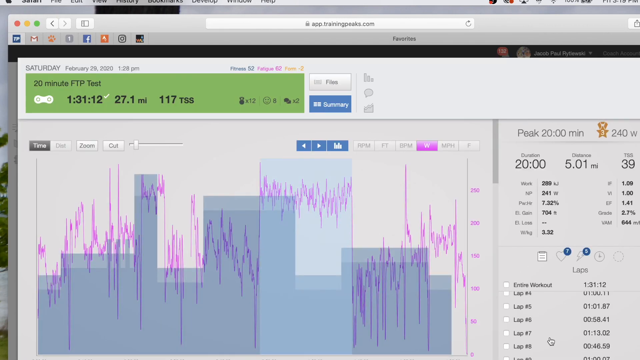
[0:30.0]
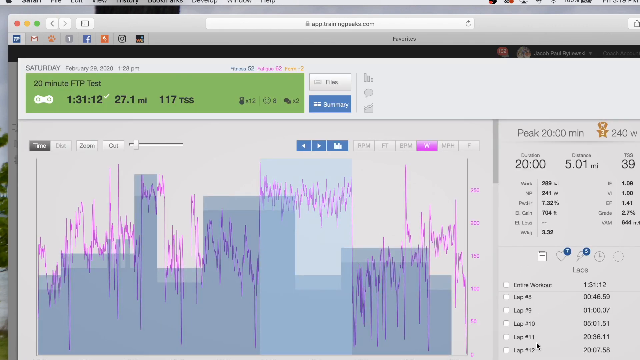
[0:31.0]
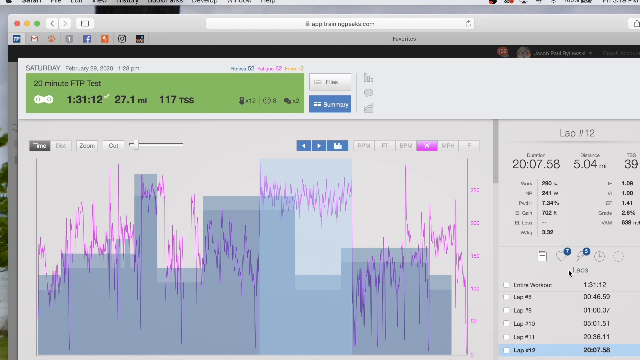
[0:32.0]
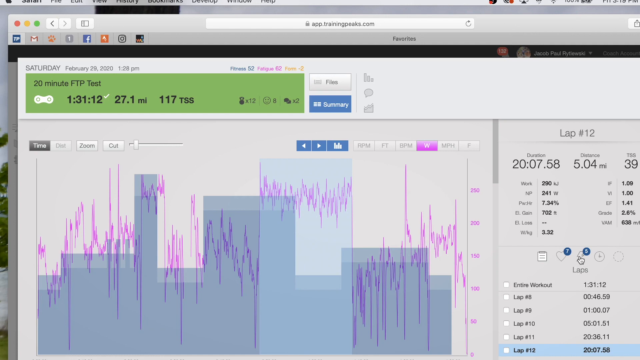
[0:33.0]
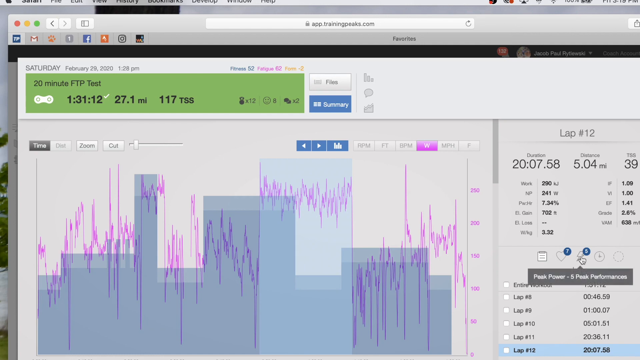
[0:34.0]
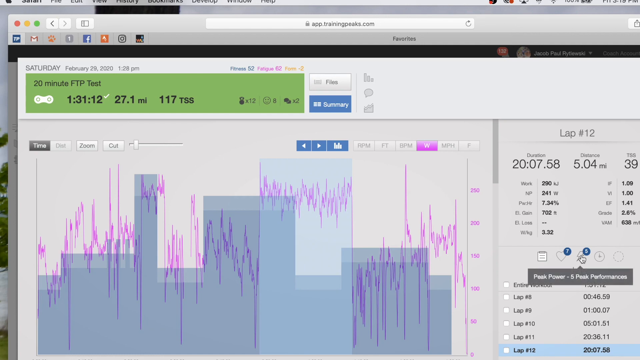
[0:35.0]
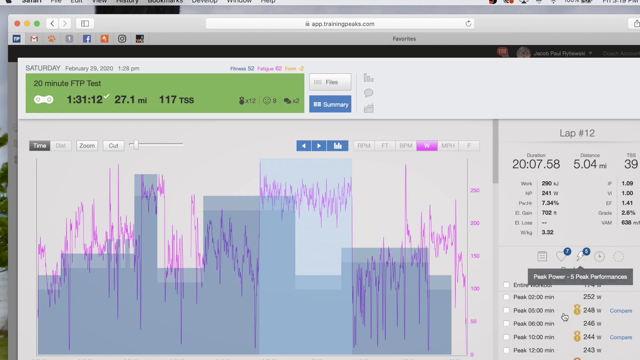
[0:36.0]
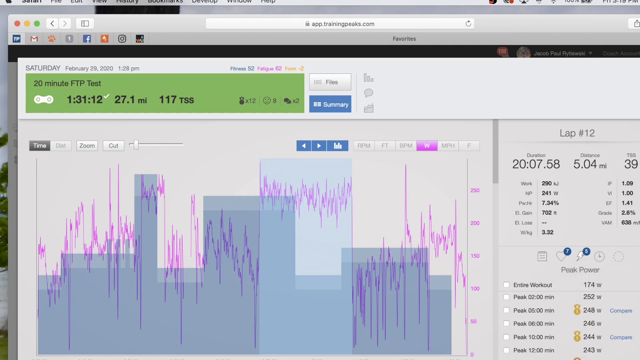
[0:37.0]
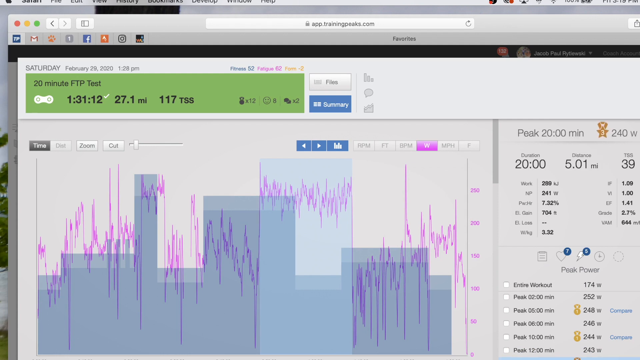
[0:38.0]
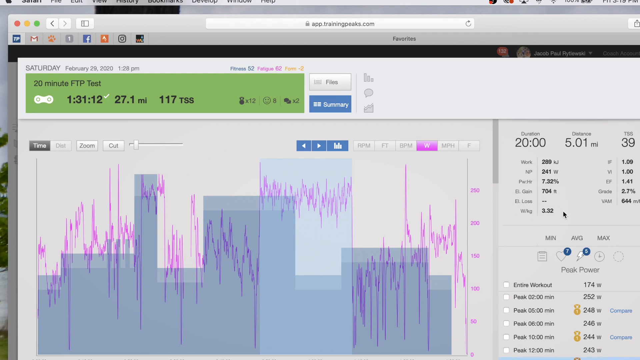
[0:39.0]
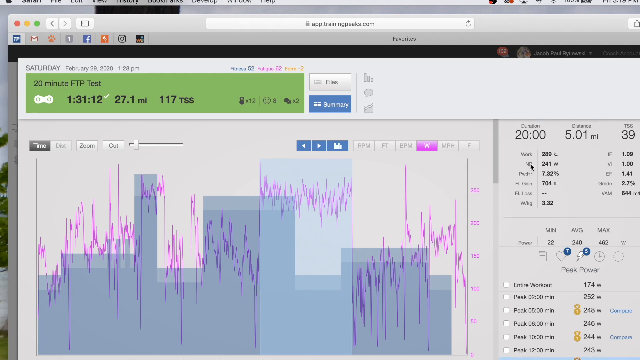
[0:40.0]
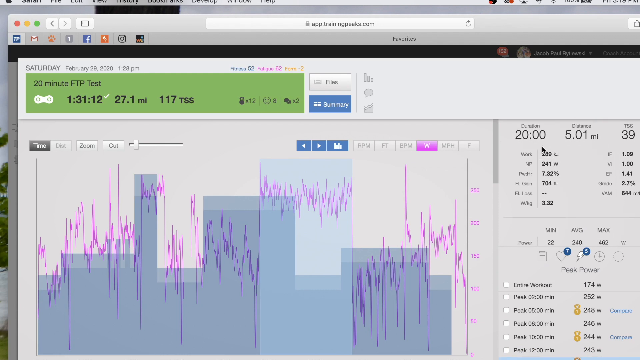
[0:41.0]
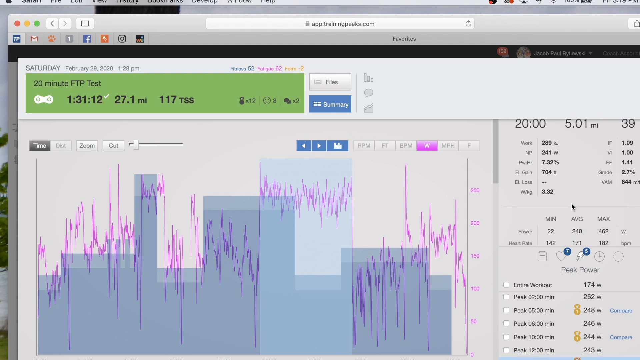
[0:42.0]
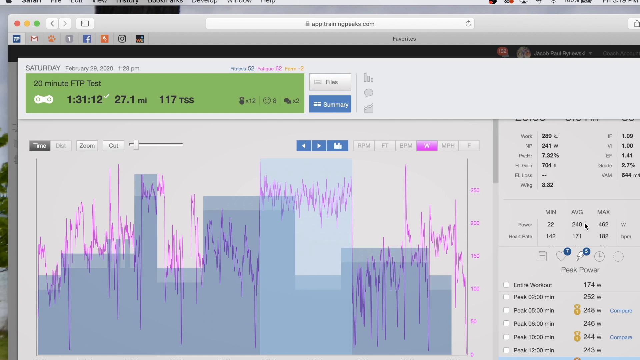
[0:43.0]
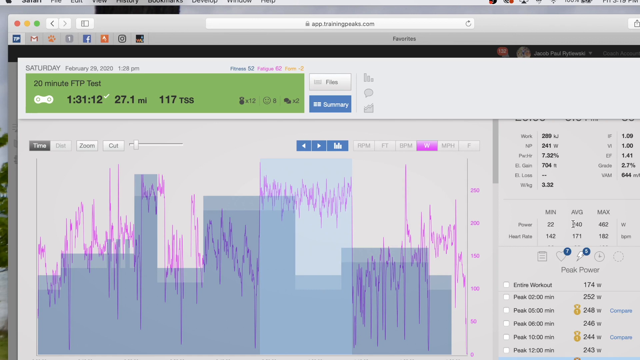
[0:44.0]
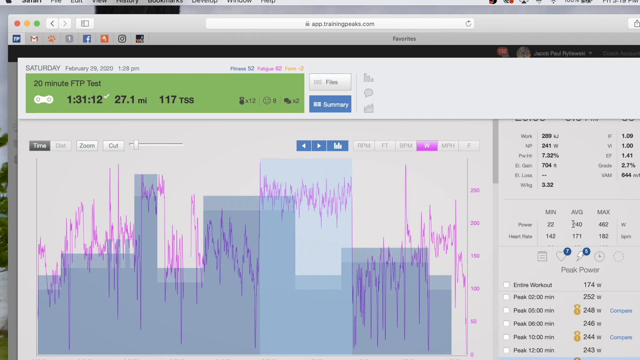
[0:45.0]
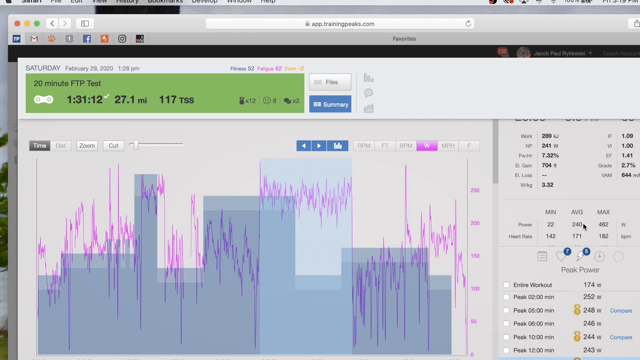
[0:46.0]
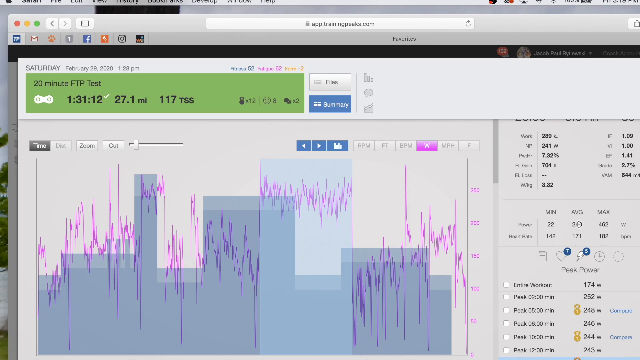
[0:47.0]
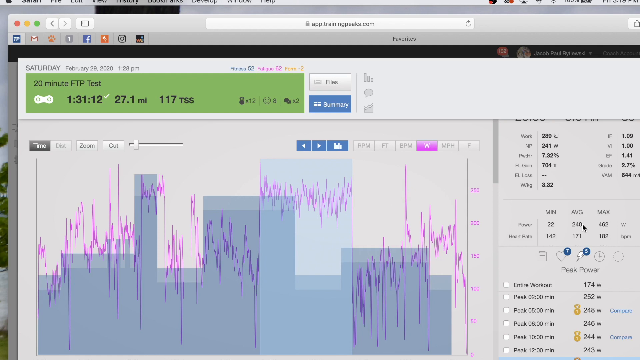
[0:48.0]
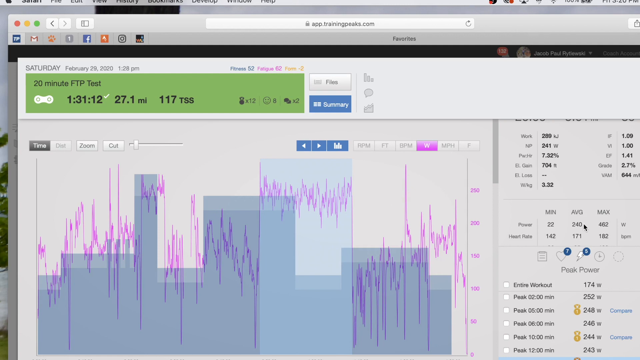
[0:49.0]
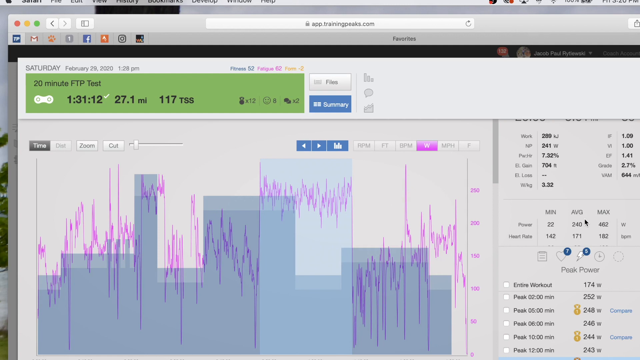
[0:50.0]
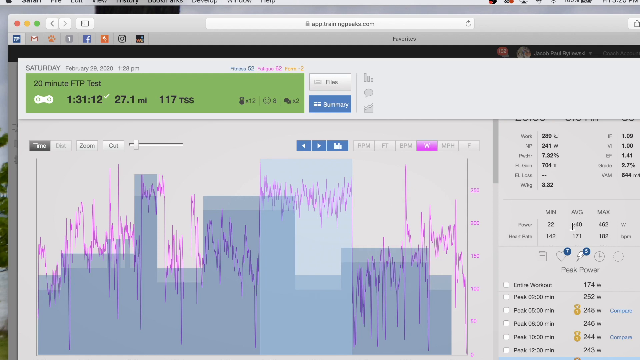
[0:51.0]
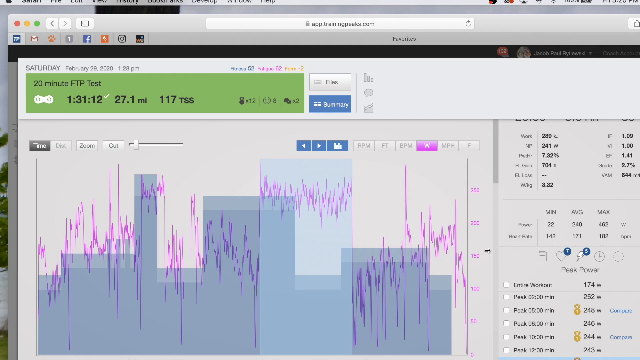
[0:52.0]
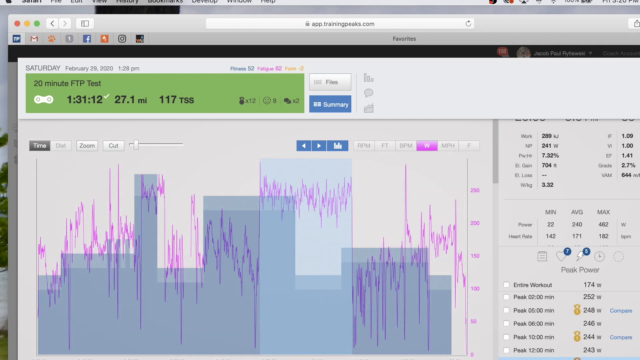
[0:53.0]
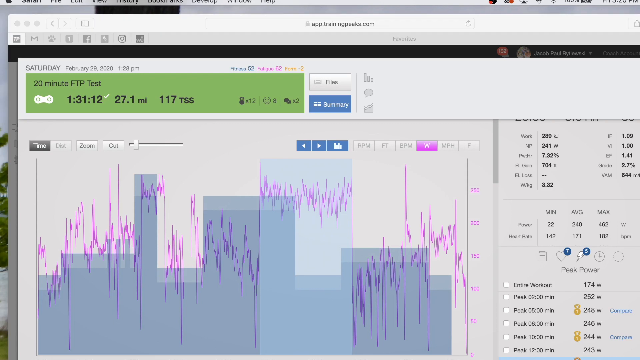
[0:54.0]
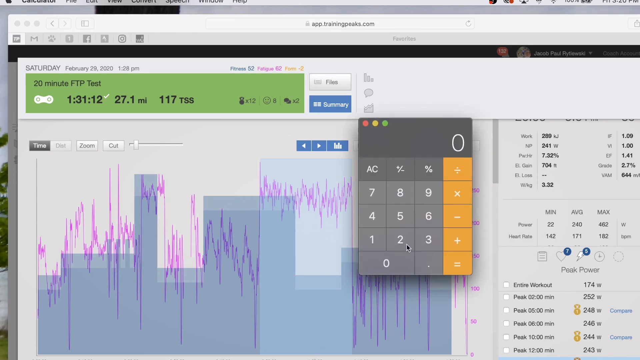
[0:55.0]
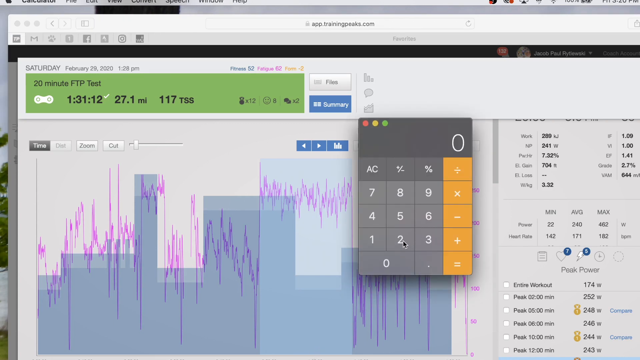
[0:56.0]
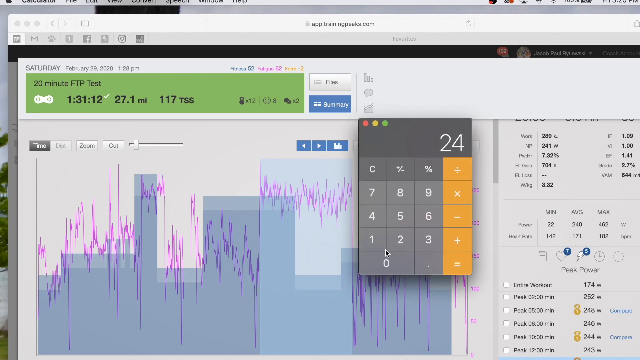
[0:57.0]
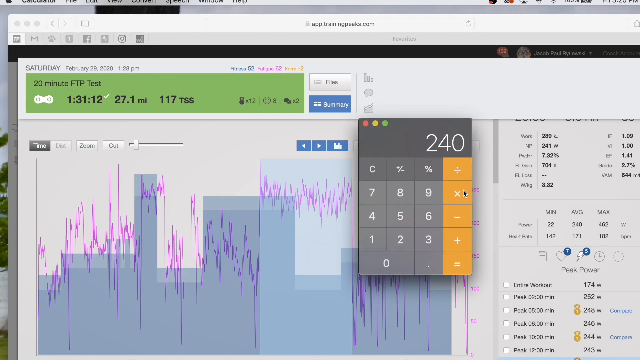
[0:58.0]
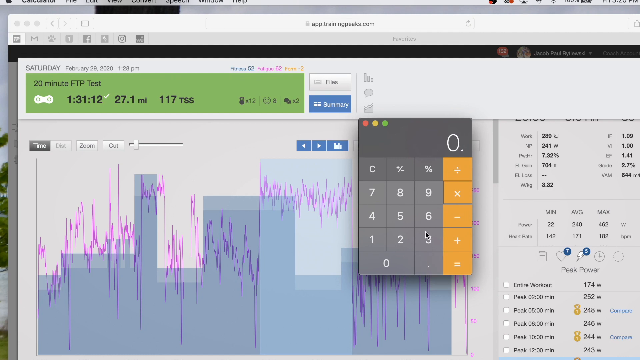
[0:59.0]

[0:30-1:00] The screen still shows a graph at the bottom on the right side. The user scrolls at the bottom and changes the selection to lap number 12, which shows information on that lap, such as speed and distance, with various information below. The cursor moves up to an icon that looks kind of like a lightning bolt, with "peak power" written below it. Going up above that, the user scrolls down through the different times and the minimum, average and max values, focusing on the average and moving the cursor back and forth over the number 240. The cursor then goes back over to the graph and clicks something that brings up a small calculator, where 240 is typed in and multiplied by 0.95. The image is very blurry all over, so some of the lettering is hard to make out. In the green rectangle at the top it says "20 minute ftp test", followed by an icon that almost looks like a small controller for a PlayStation or an old-school Nintendo, then 1 hour 31 minutes 12 seconds, 27.1 miles and 117 TSS. Outside it to the right is a gray button that says "files", and underneath it says "summary".